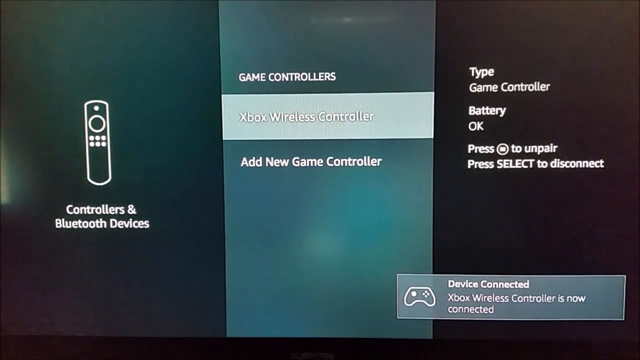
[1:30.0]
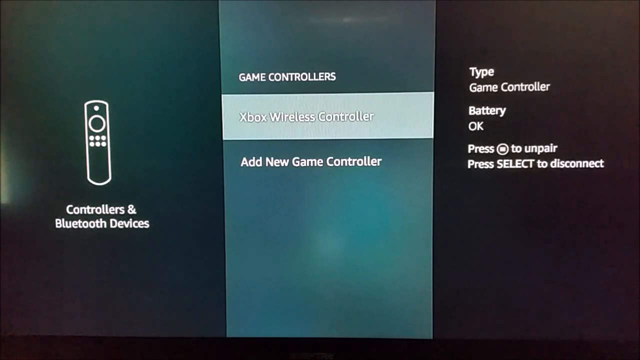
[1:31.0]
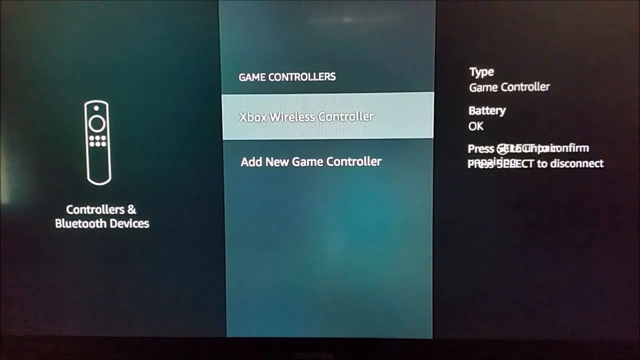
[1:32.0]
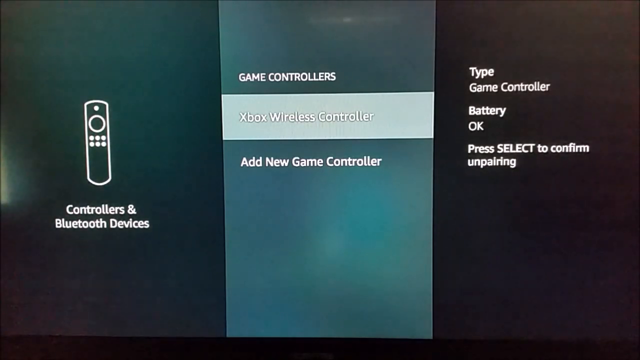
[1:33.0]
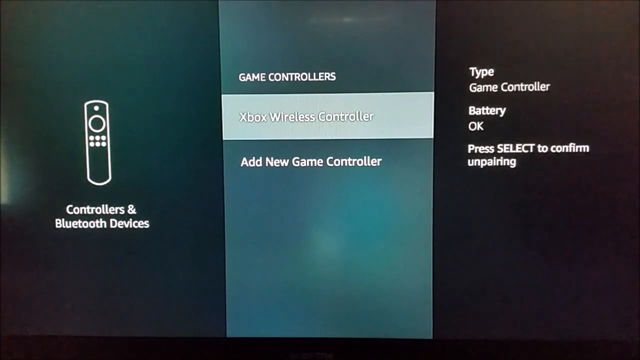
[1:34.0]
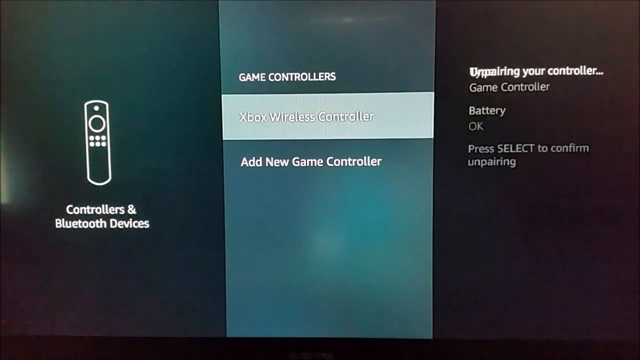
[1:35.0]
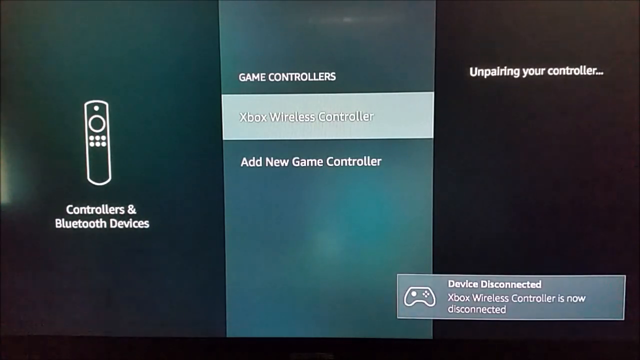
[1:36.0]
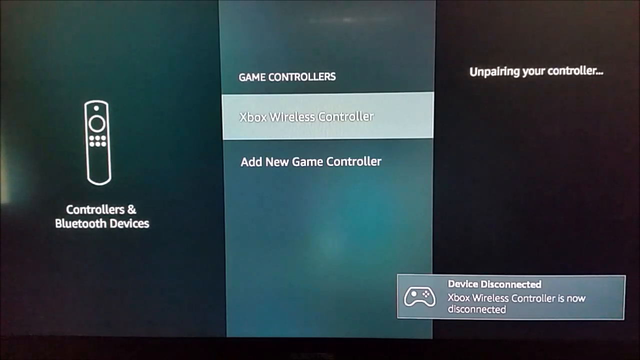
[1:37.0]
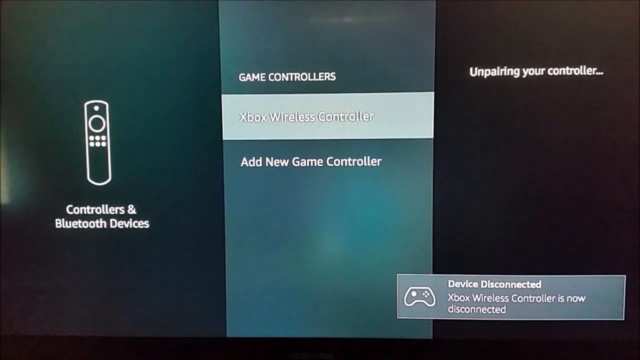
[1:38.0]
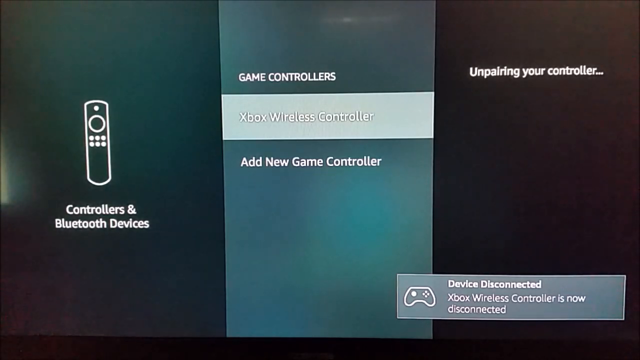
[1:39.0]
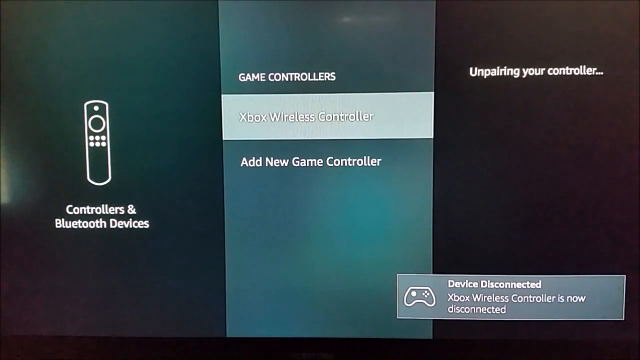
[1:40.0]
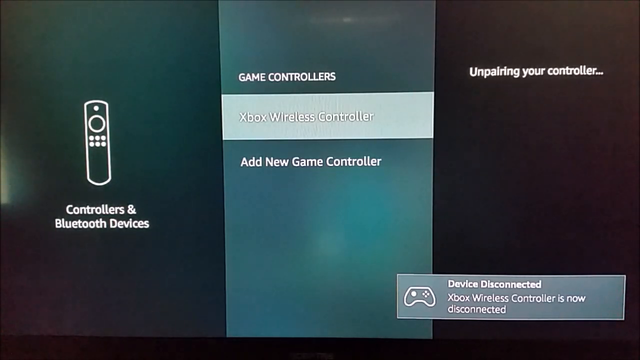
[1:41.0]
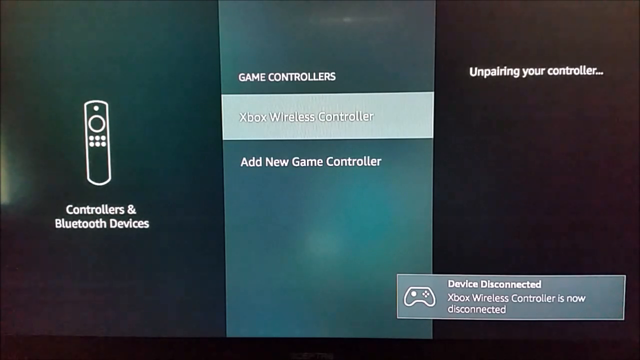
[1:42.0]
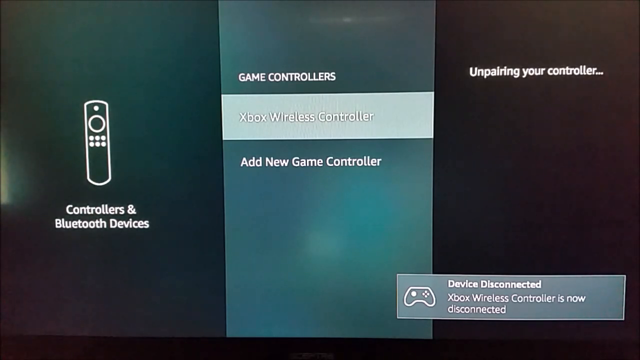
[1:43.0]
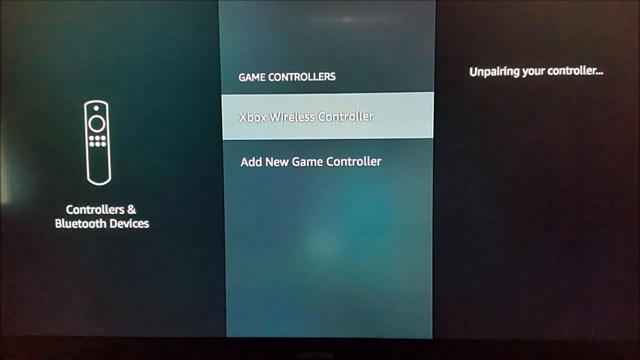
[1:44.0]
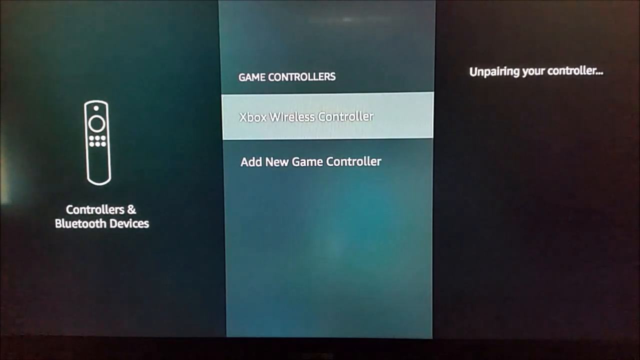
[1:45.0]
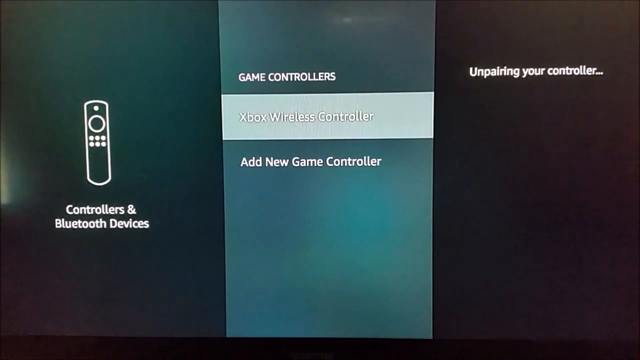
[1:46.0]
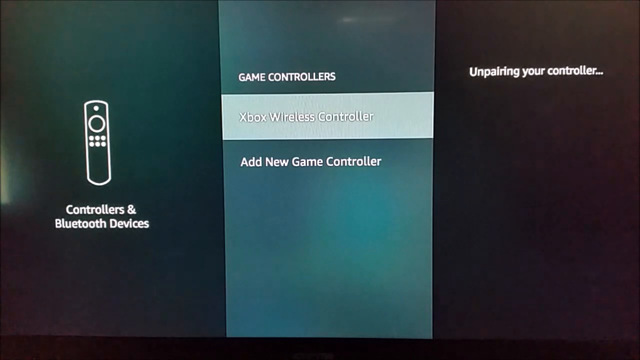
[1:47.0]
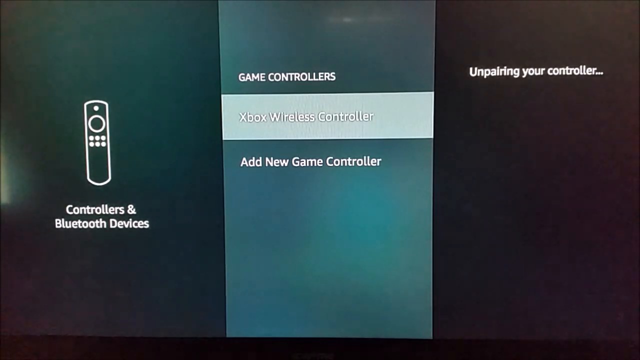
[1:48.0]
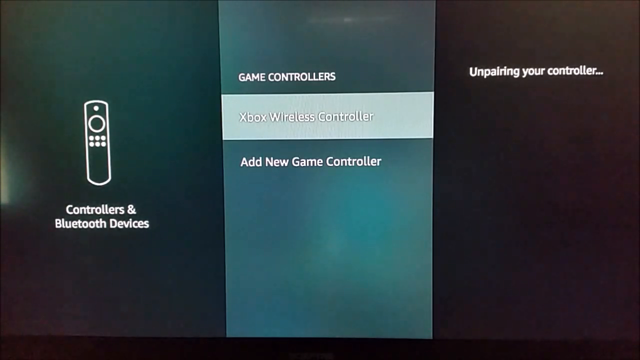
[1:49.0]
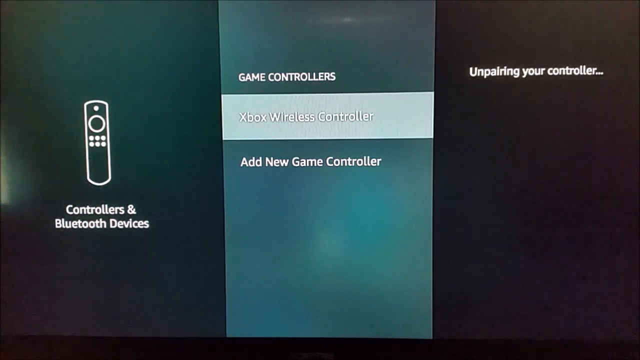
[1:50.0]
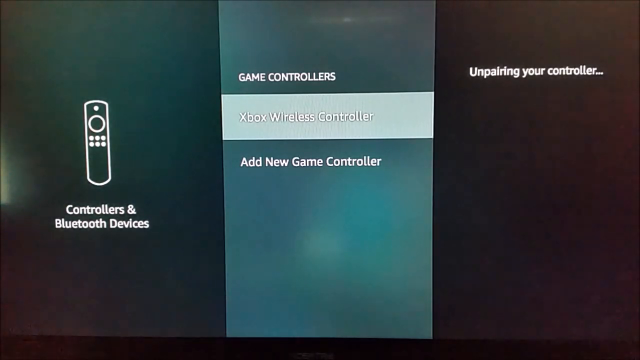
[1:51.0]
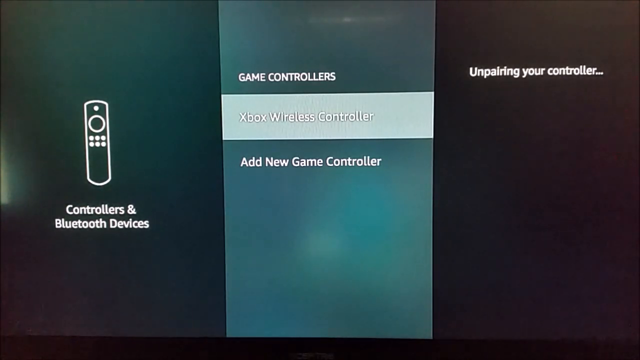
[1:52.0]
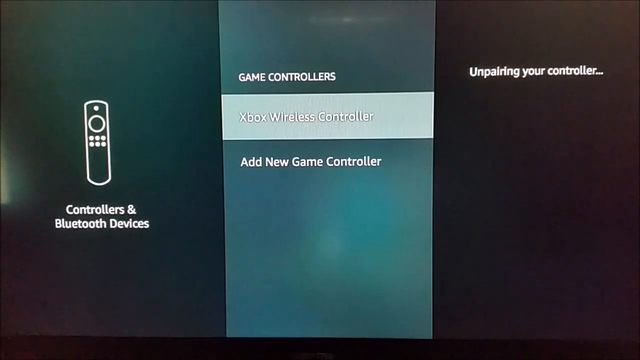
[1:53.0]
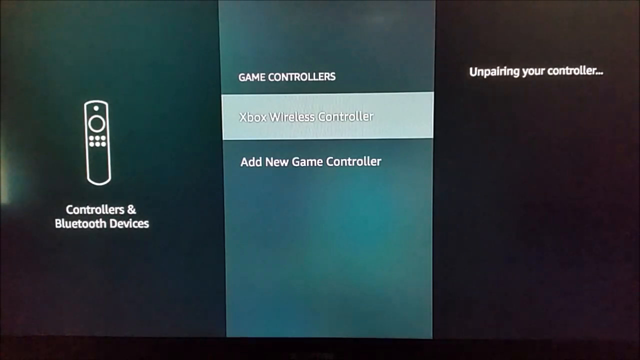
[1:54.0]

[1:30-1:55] The screen shows how to unpair the Xbox wireless controller after it has been paired, with text reading "select to confirm." The device then appears to be disconnected, with a message that the wireless controller is now disconnected, while another message, apparently about pairing the controller, still remains.